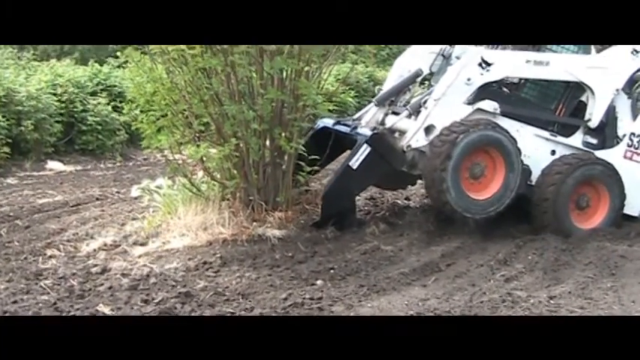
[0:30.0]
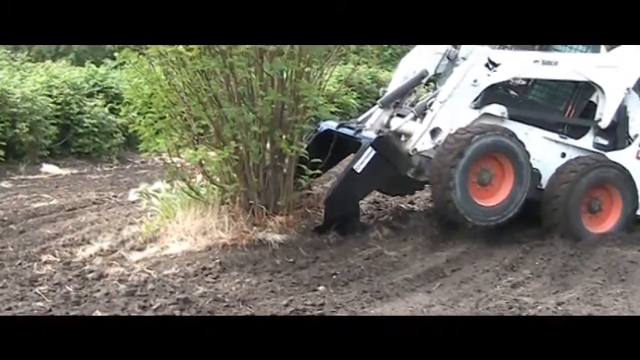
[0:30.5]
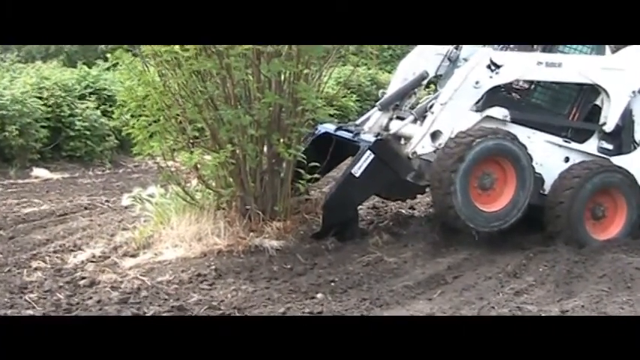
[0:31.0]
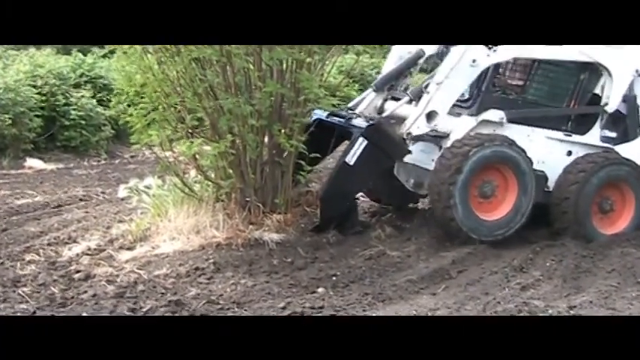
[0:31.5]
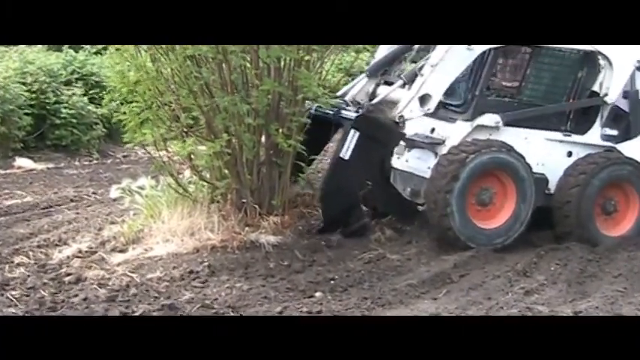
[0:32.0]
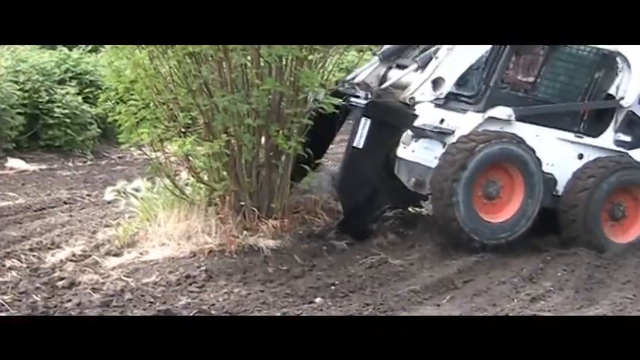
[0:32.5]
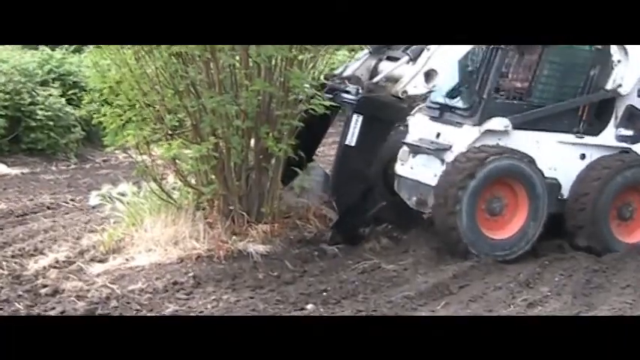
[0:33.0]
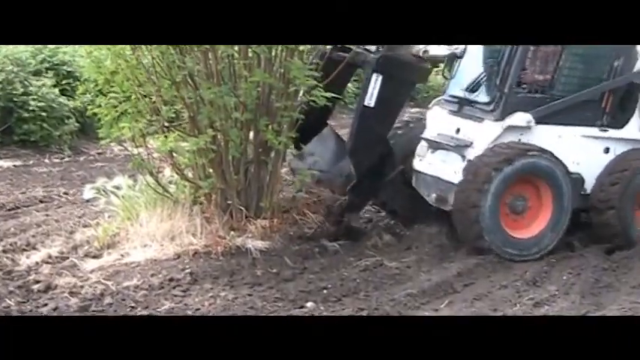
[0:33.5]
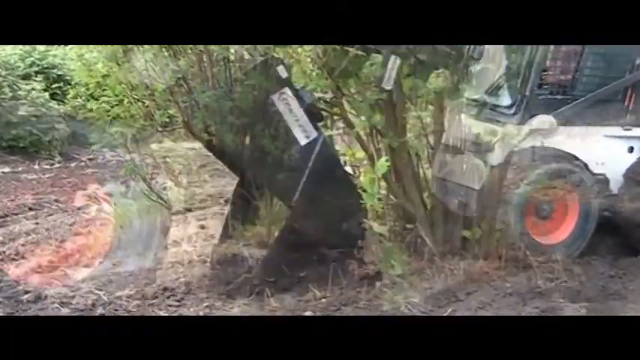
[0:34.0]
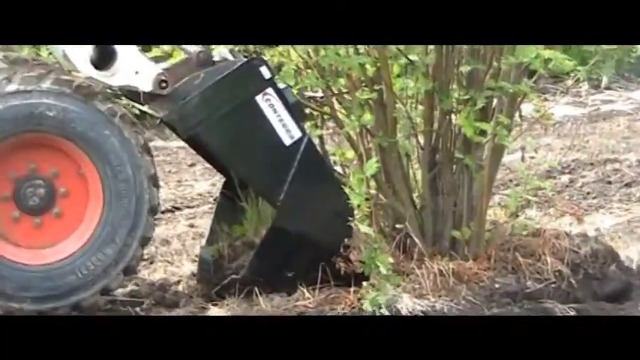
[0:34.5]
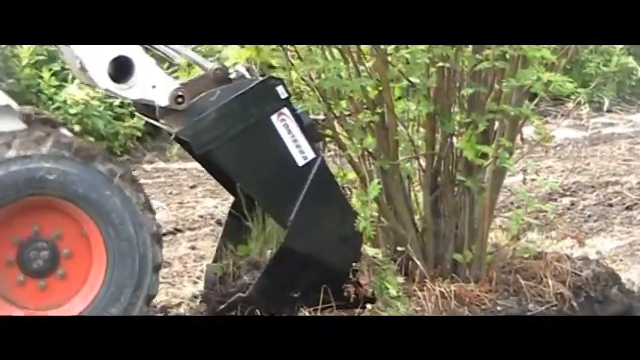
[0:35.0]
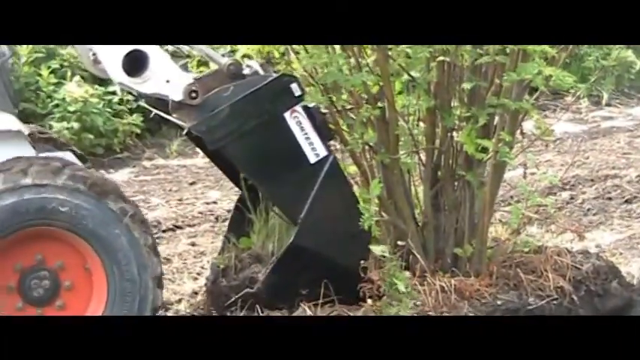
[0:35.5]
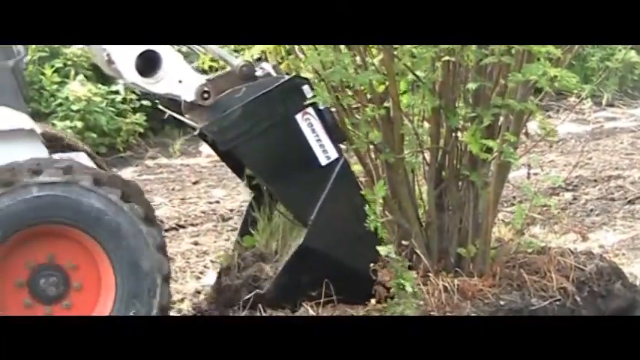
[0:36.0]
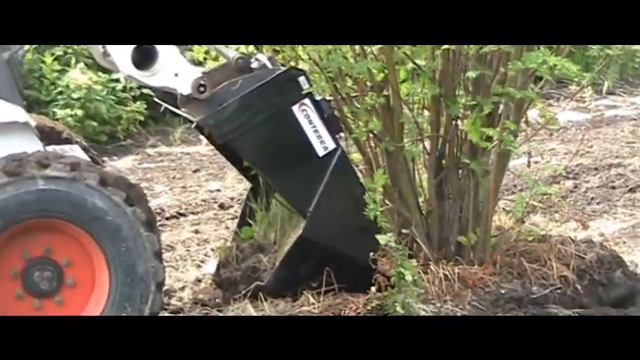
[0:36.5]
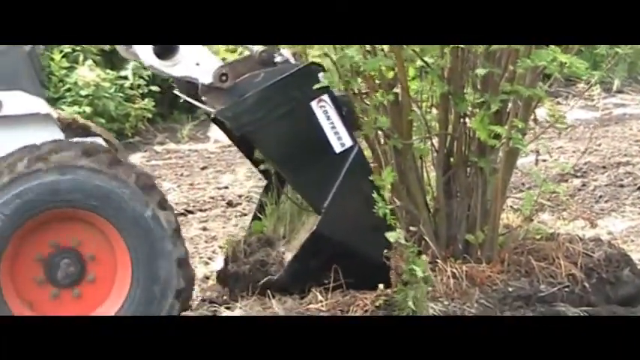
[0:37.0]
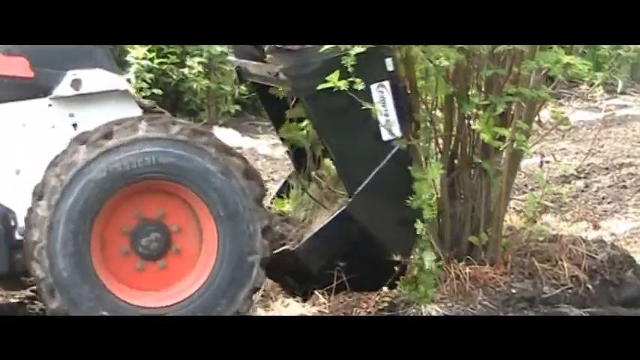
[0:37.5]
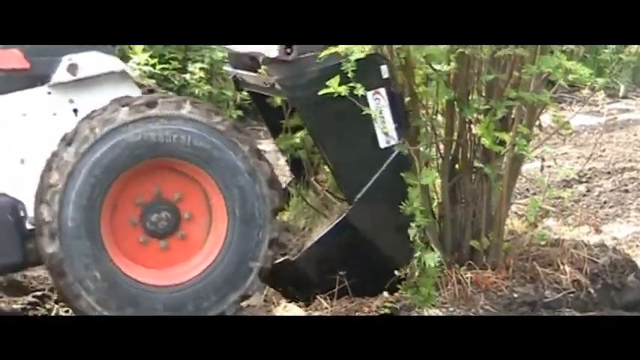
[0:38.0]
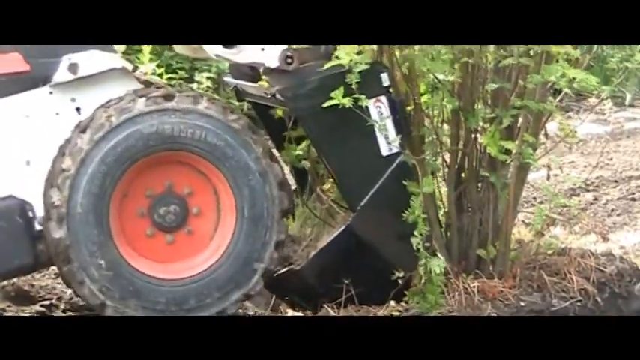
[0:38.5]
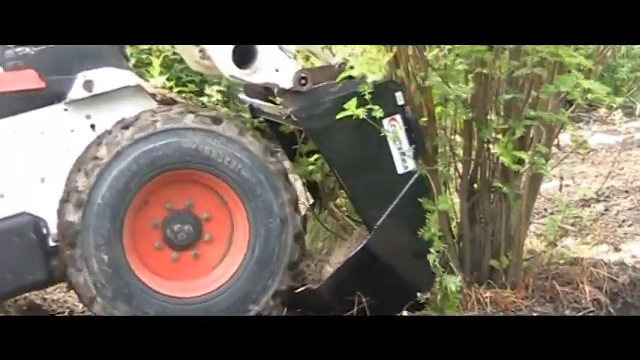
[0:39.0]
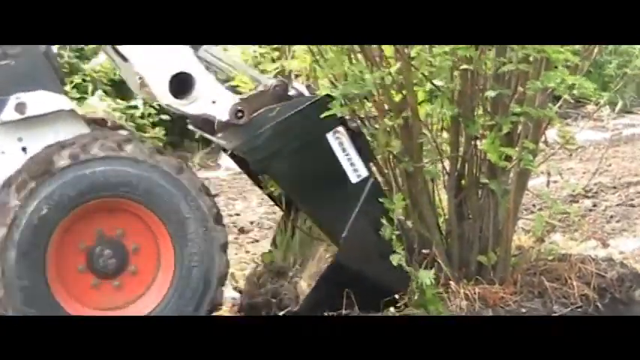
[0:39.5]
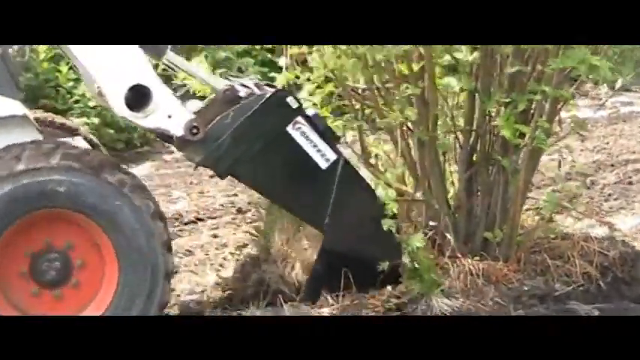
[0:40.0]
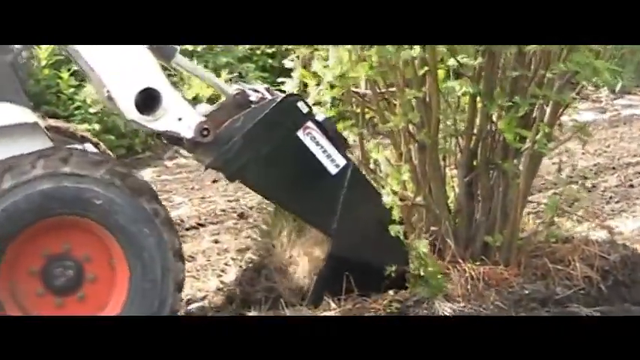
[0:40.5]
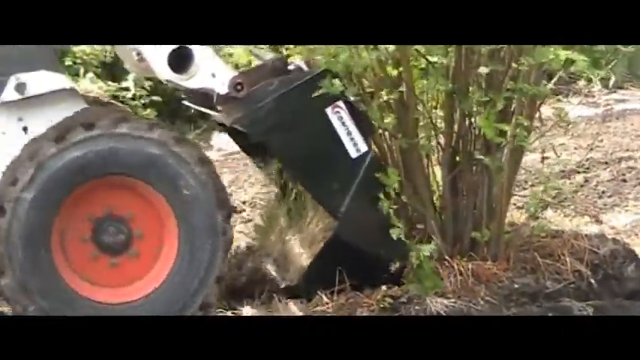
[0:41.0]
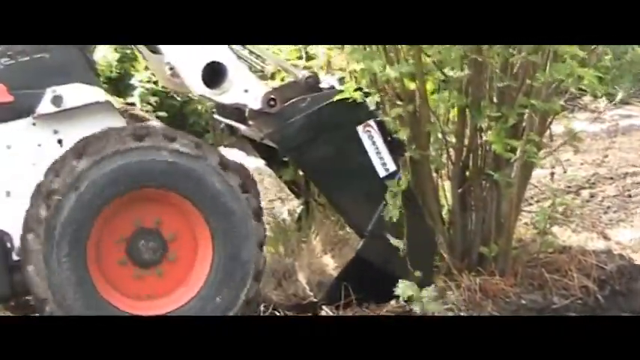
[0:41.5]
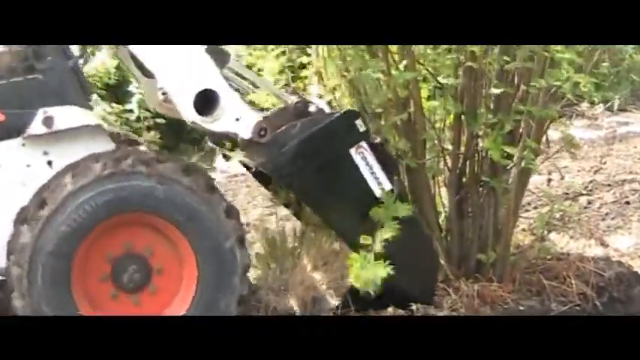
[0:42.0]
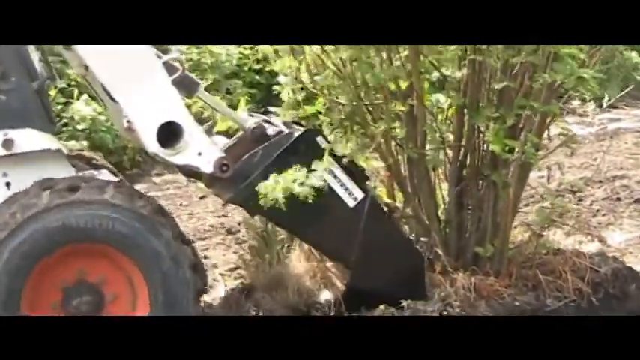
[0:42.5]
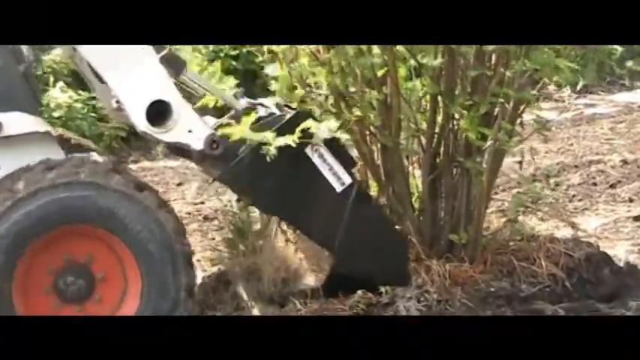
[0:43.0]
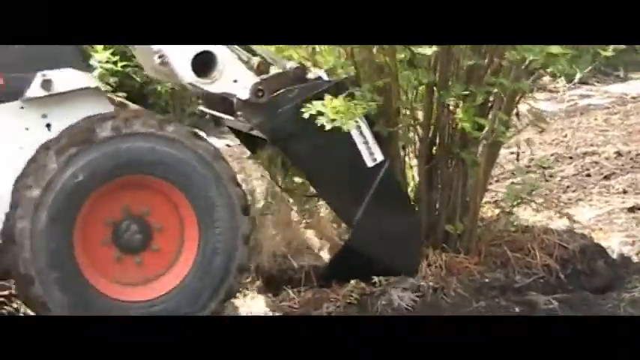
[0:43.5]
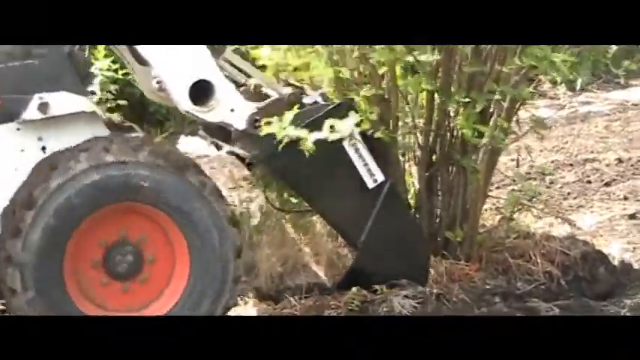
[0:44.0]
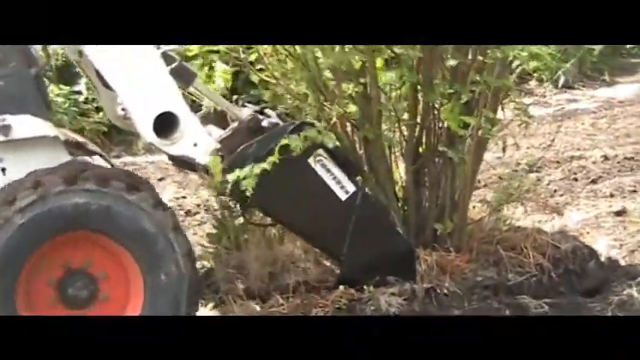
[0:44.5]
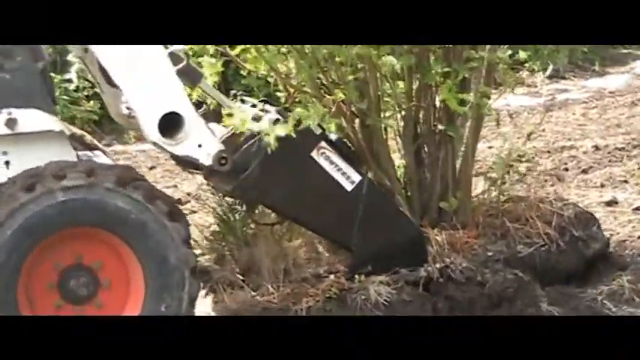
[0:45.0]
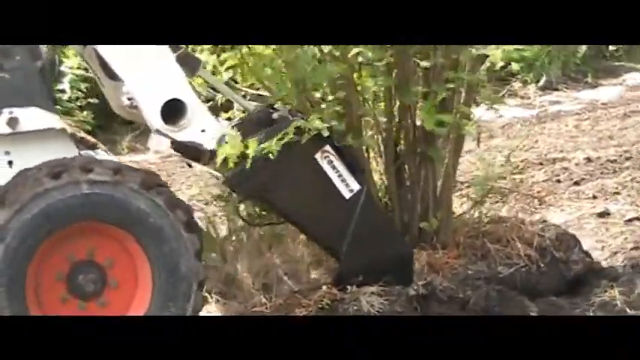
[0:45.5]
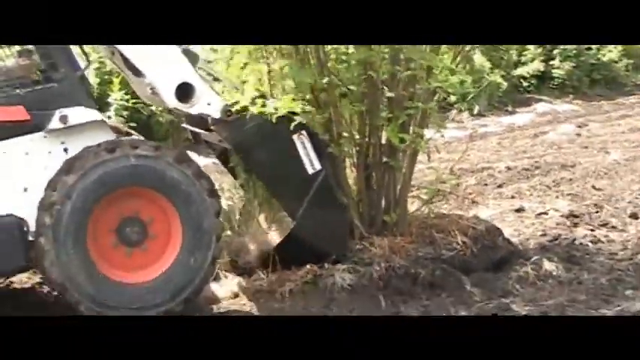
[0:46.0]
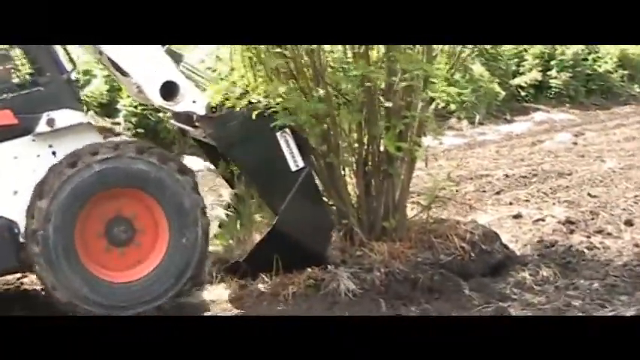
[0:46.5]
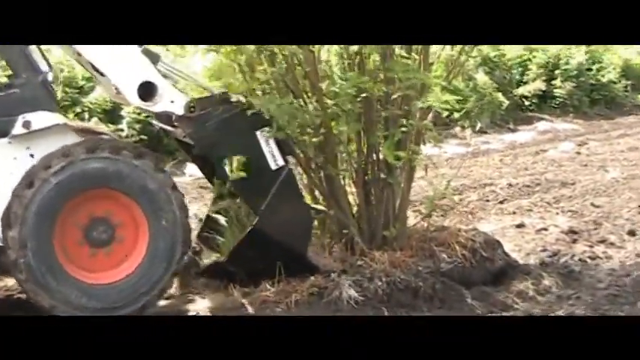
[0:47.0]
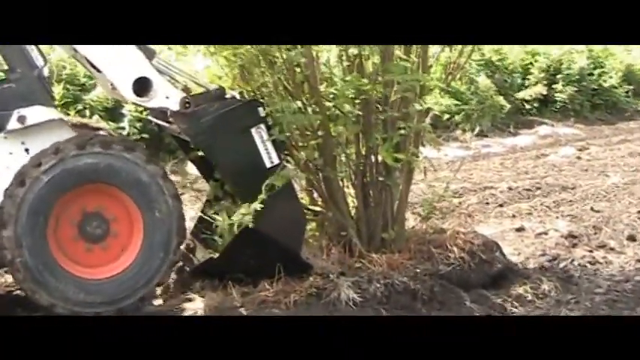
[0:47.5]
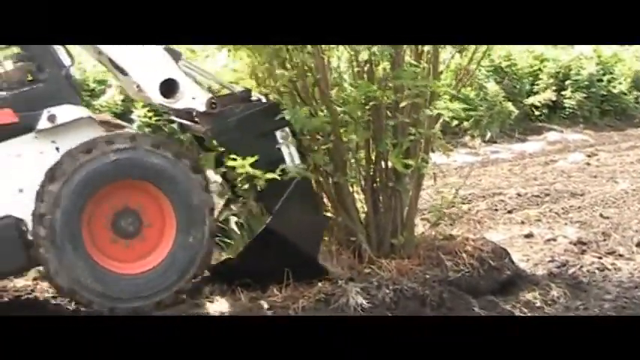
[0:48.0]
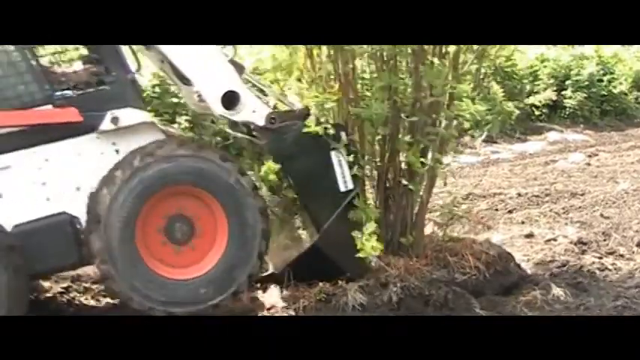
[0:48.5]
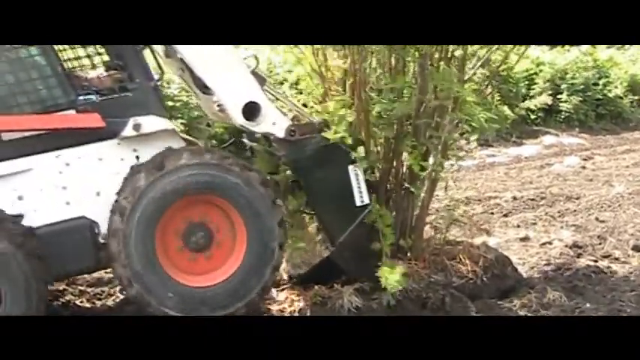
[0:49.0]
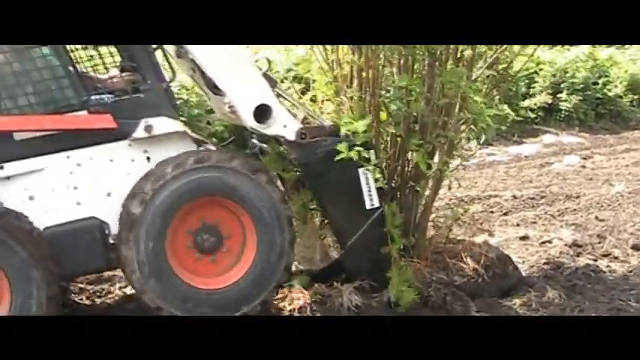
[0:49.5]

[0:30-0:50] A little white machine, like a backhoe or a bulldozer, uses an attachment to pry a small tree or bush out of the ground. It approaches from different angles, digs in and tries to pry the roots up; the tree budges and moves slightly as it keeps trying. There is a lot of dirt around the edges. Some evergreen trees are around it, but this one is not evergreen; it looks like a bundle of sticks, a bush of some sort, that the tree shovel attachment is digging around and trying to pull out of the ground.